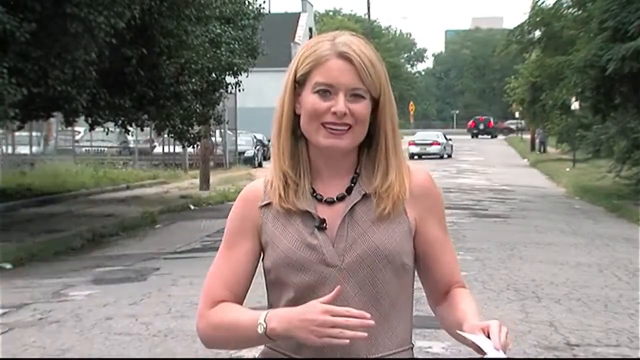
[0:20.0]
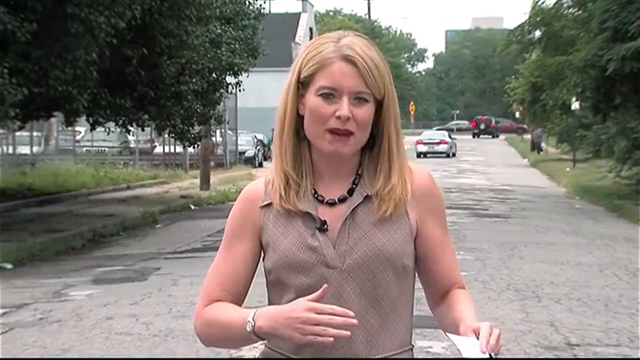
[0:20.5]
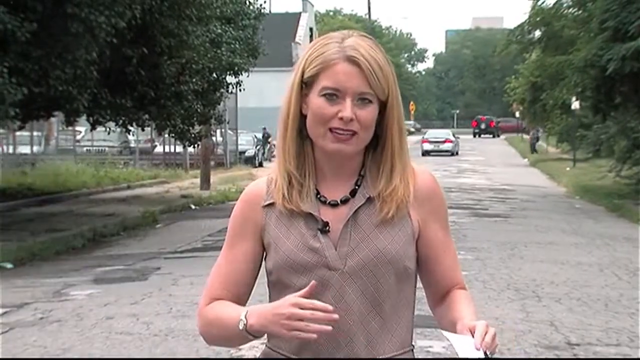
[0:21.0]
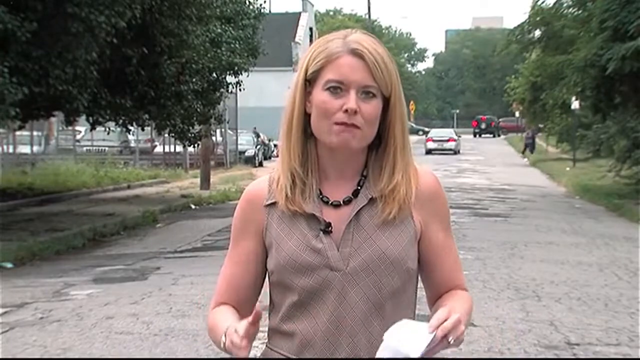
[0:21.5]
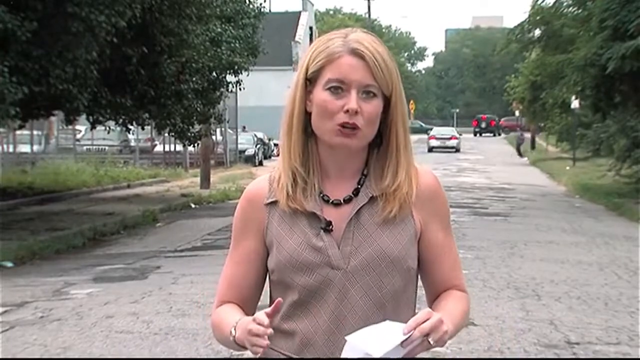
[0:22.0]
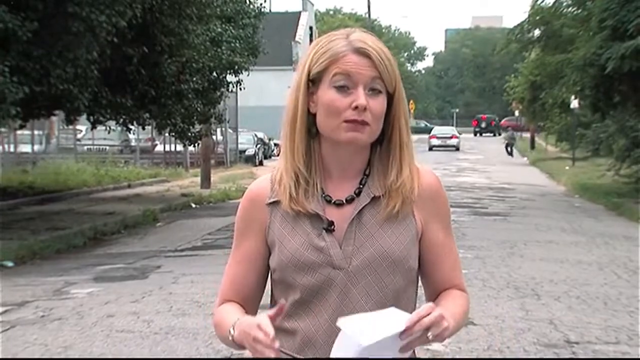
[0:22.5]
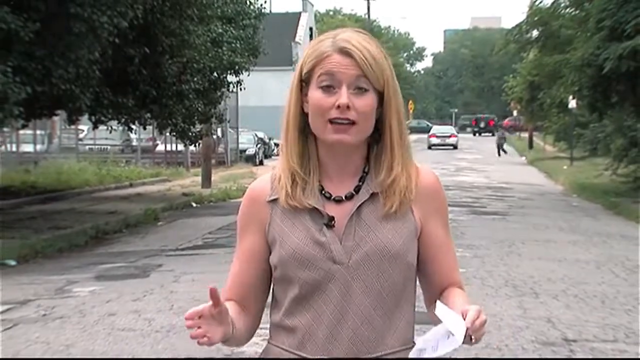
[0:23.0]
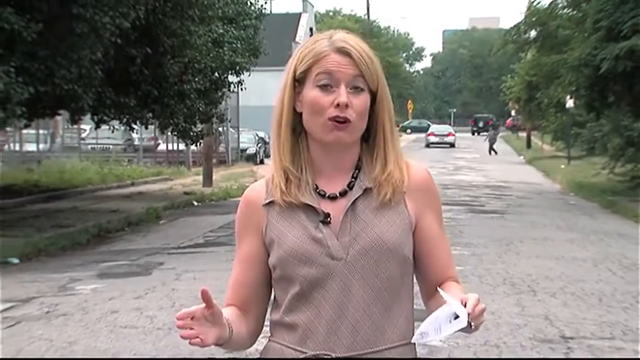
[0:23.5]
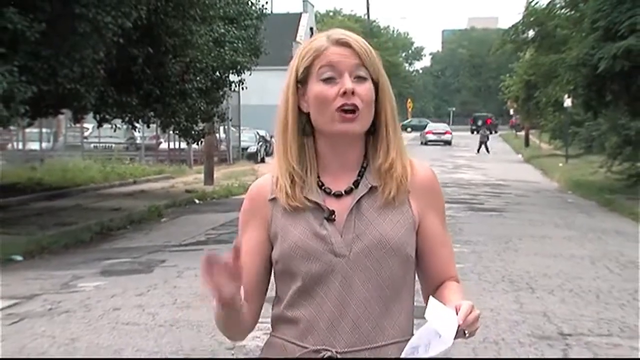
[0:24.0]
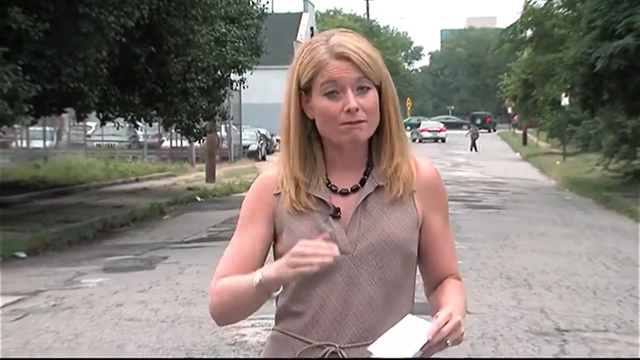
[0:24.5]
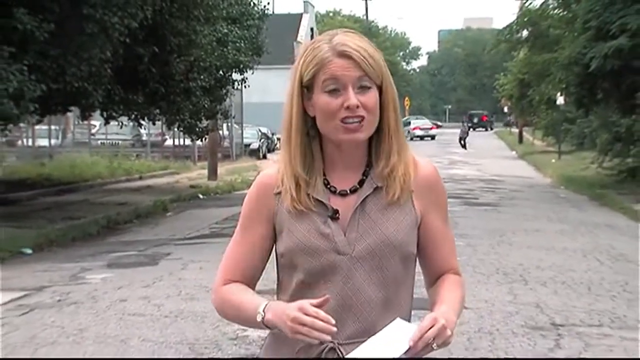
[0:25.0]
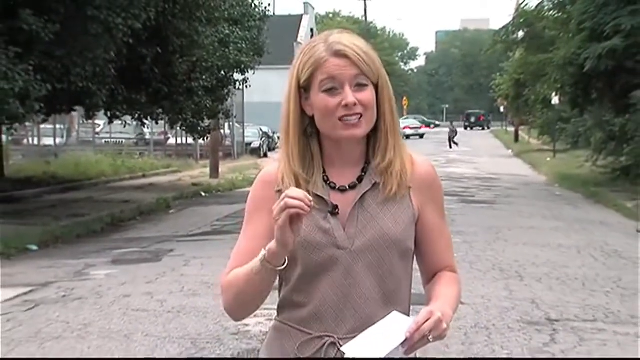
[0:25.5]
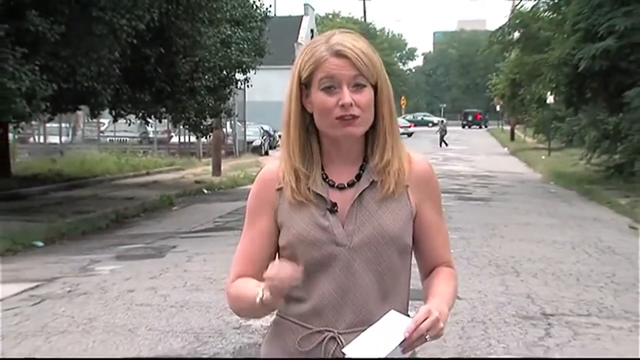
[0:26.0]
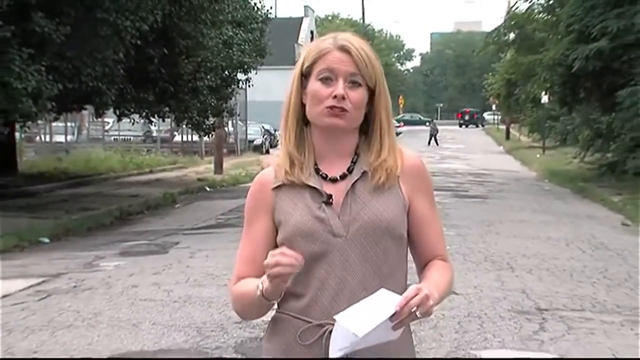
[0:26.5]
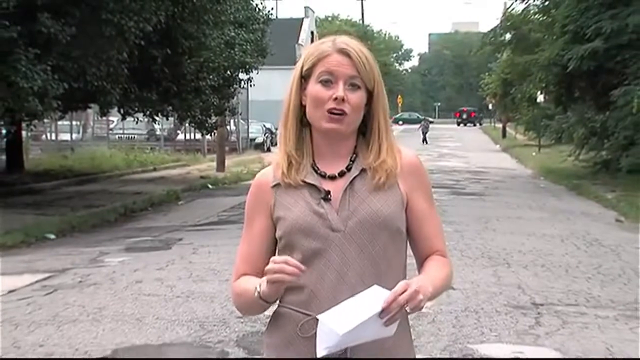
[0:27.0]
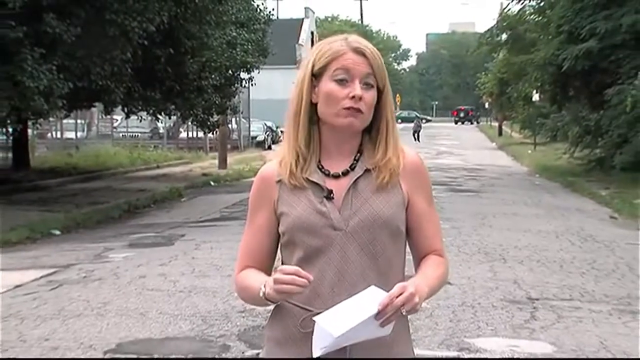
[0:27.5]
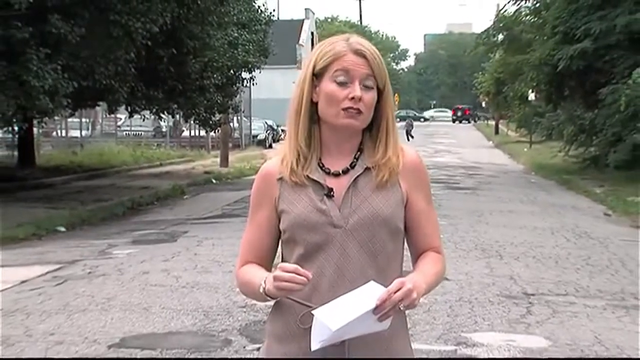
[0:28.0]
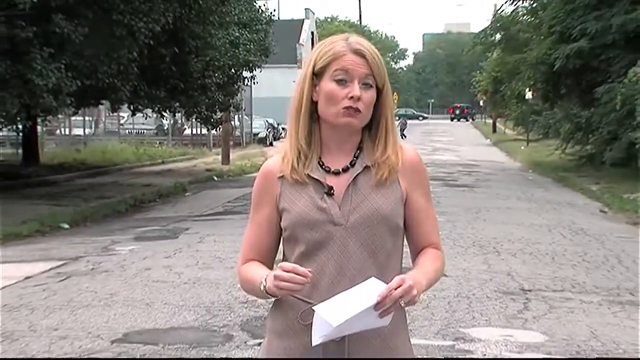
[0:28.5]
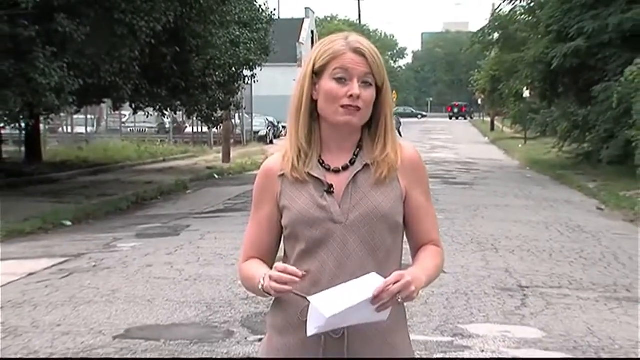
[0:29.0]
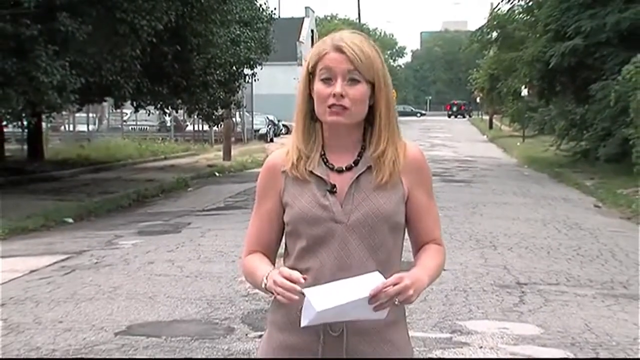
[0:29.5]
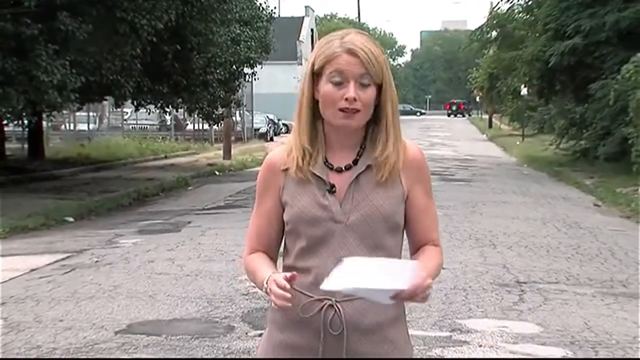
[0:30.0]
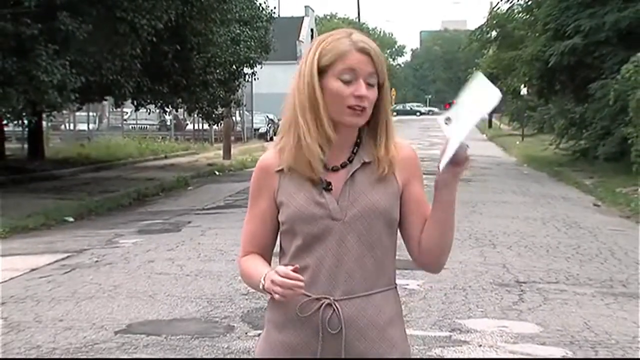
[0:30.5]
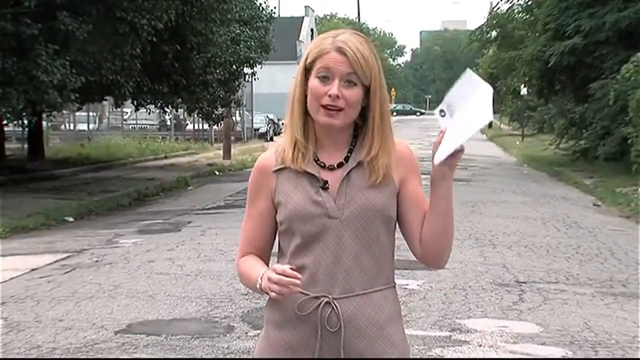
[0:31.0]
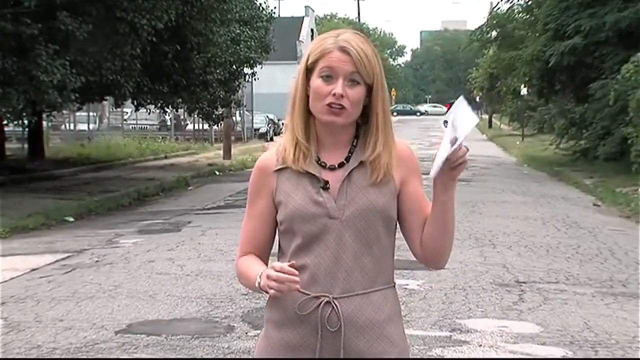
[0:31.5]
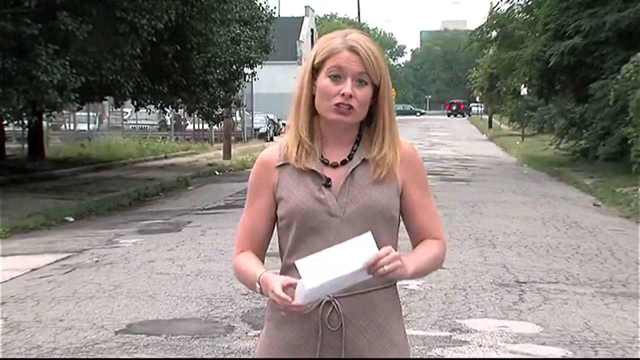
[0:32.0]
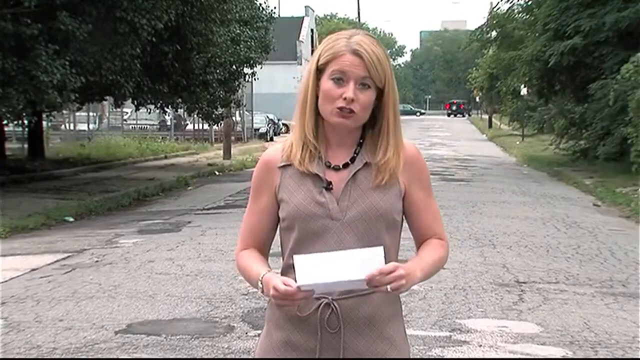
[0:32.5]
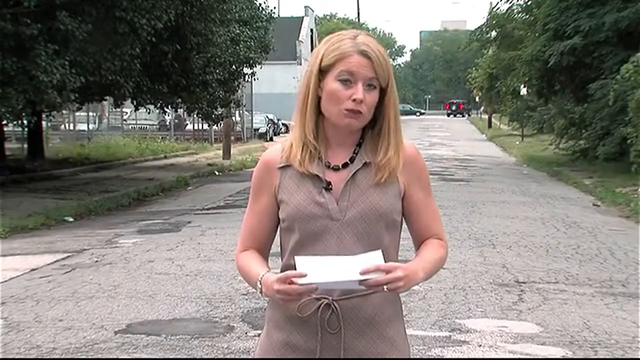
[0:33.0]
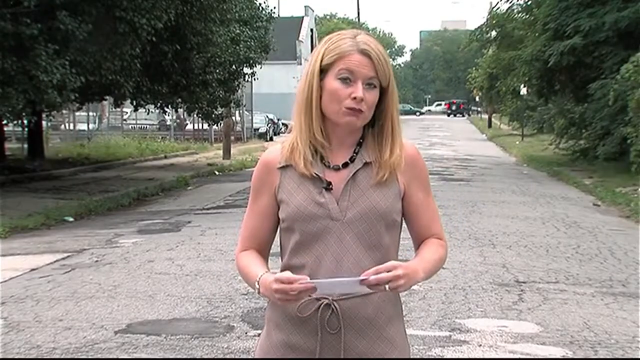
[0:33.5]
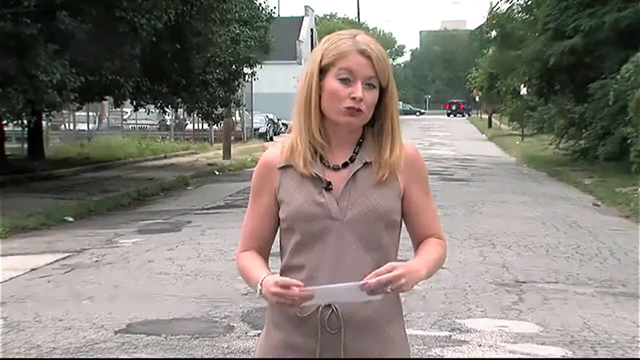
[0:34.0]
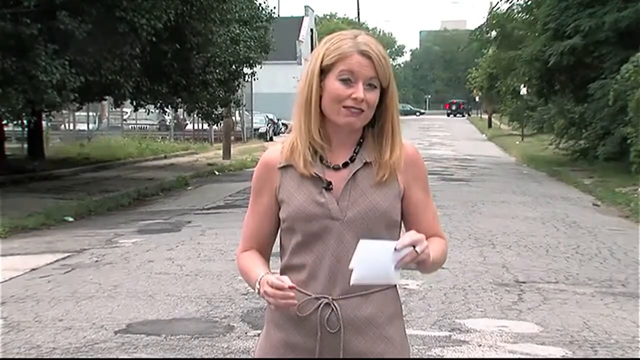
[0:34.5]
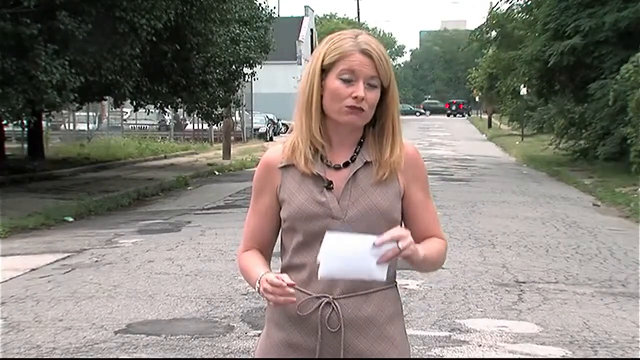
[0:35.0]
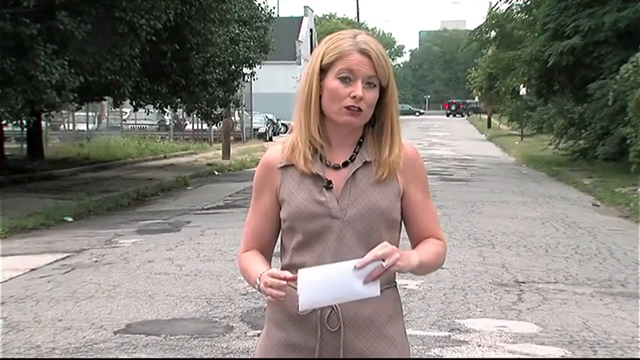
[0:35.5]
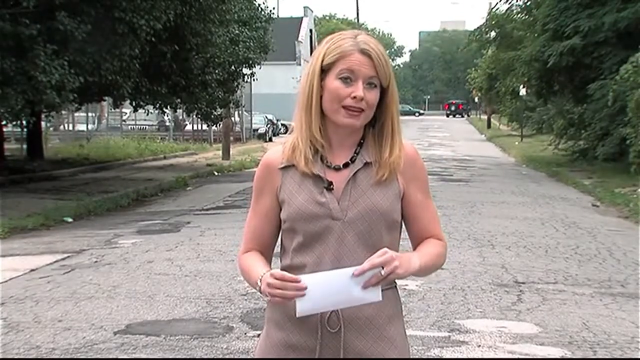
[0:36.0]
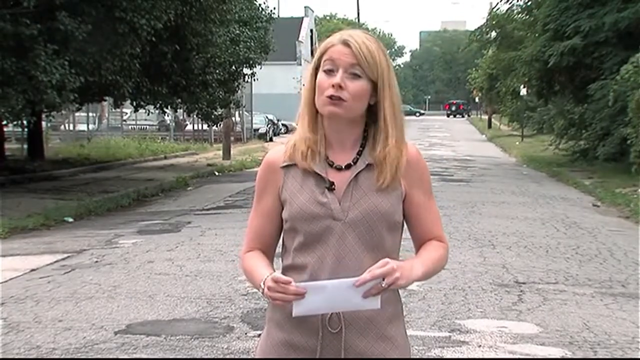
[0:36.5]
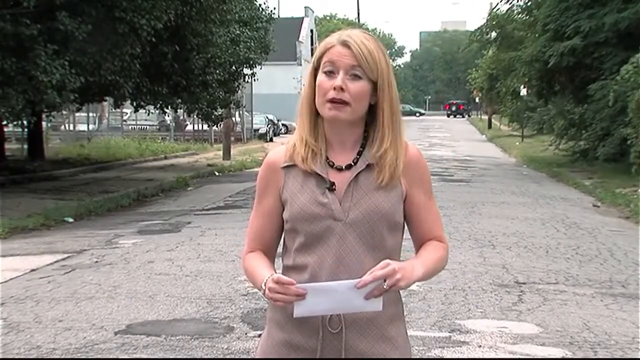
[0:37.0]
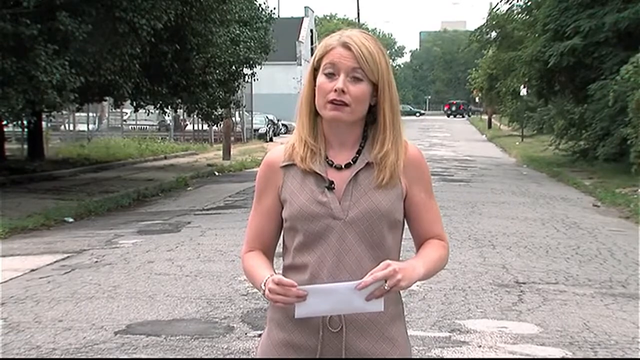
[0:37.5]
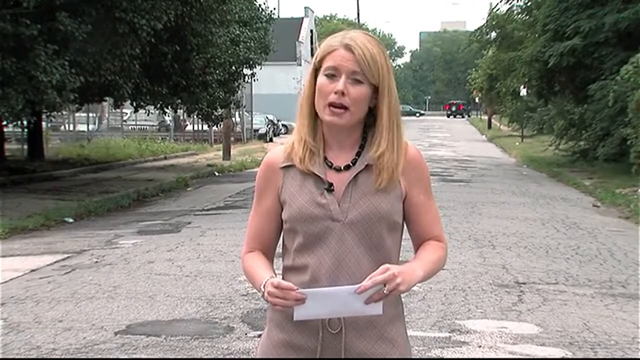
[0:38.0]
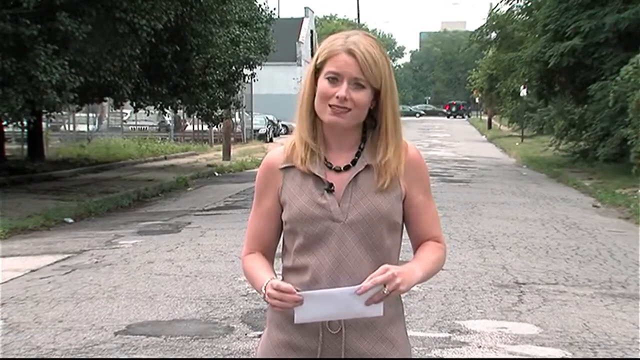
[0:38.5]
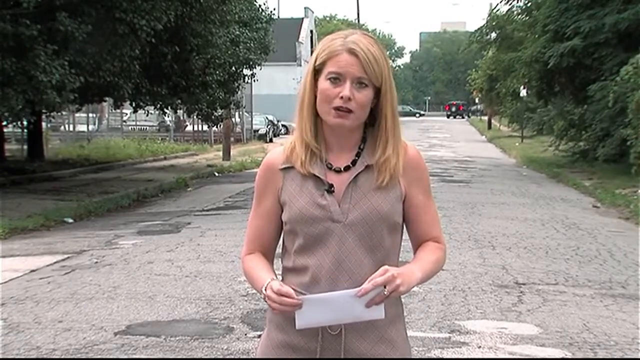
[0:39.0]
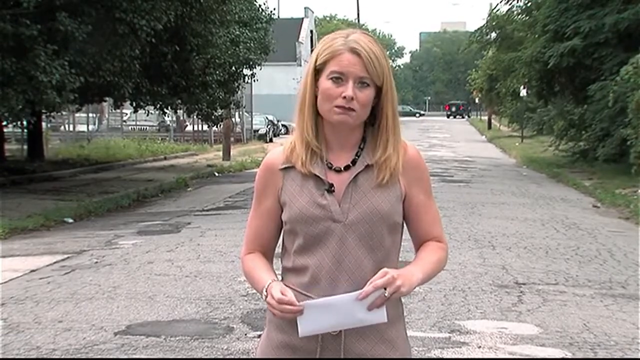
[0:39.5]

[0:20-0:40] A blonde lady reports from the ground about the poor condition of the road, where potholes are visible. She wears a black necklace, a green vest with a microphone attached to it, and a watch on her right wrist. Behind her are a silver vehicle, a black vehicle, some vehicles parked at the house, and trees. Two people walk behind her: one goes toward the parked cars and the other crosses the road. Far back is another junction where the road she is on joins. The lady holds a paper while reporting. The road is in poor condition with potholes, and ten vehicles pass on the junction.